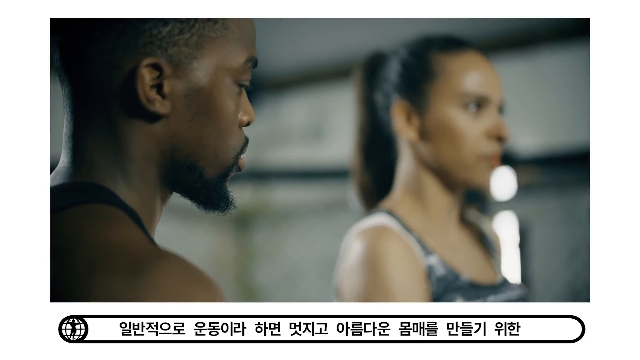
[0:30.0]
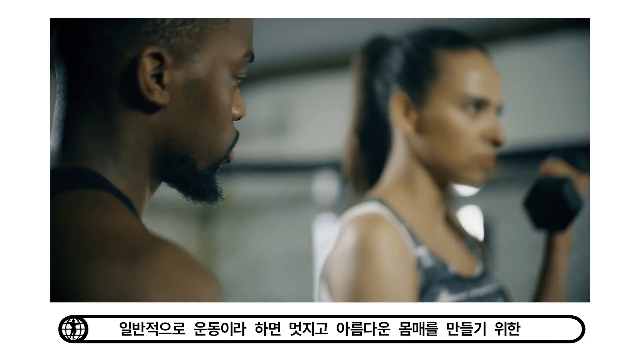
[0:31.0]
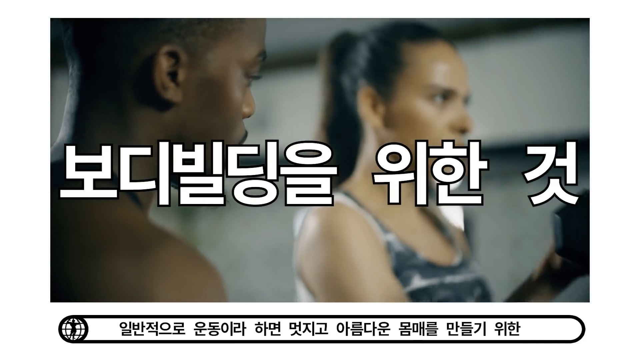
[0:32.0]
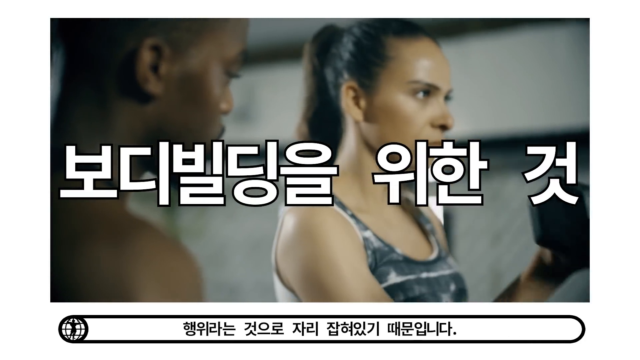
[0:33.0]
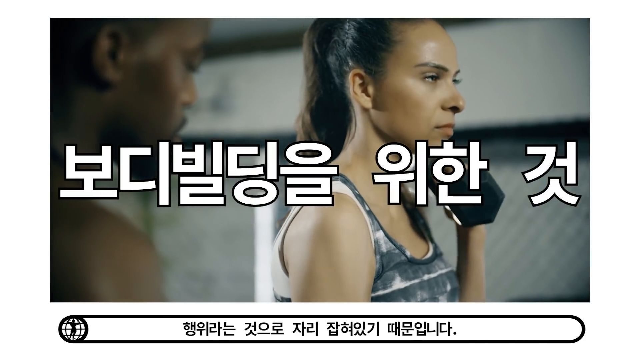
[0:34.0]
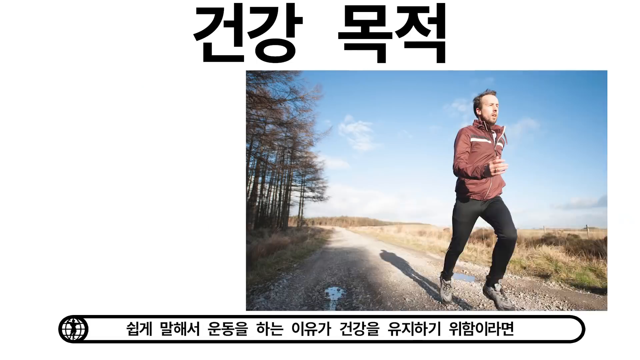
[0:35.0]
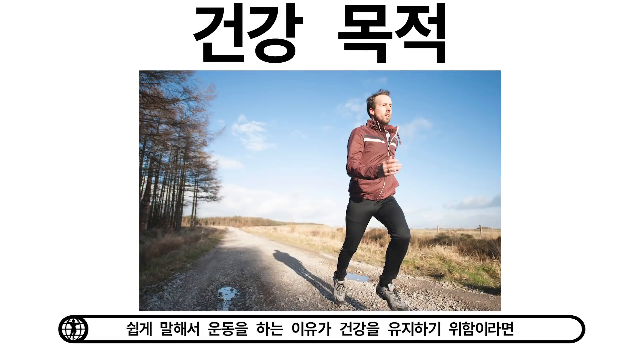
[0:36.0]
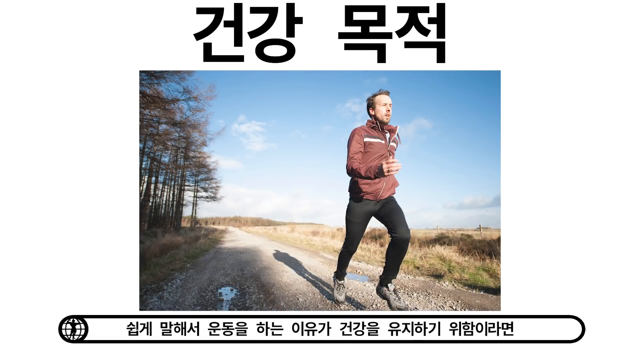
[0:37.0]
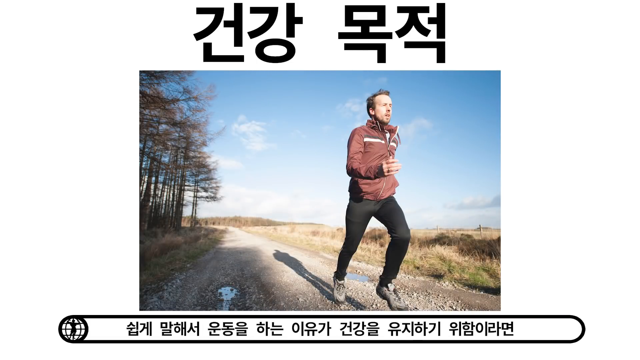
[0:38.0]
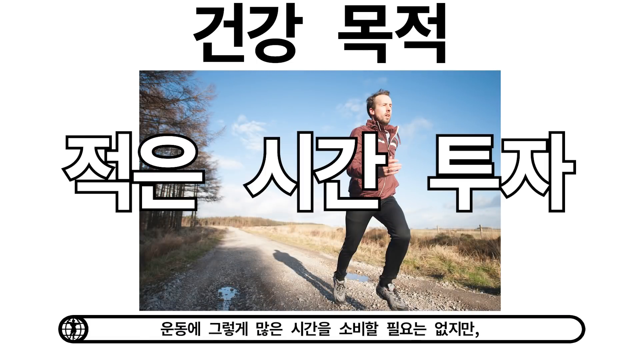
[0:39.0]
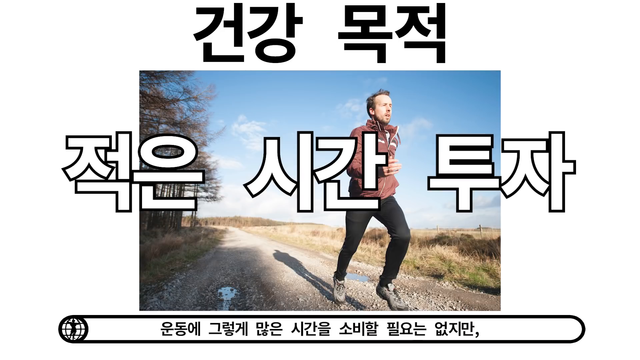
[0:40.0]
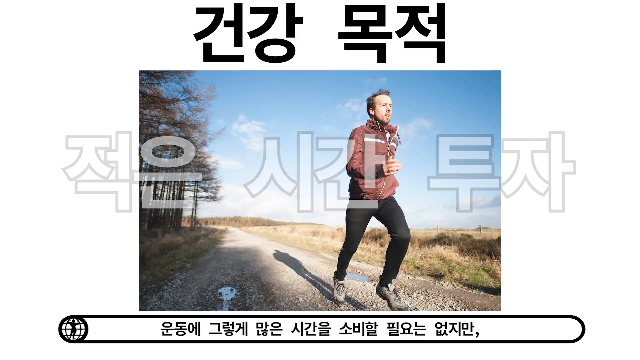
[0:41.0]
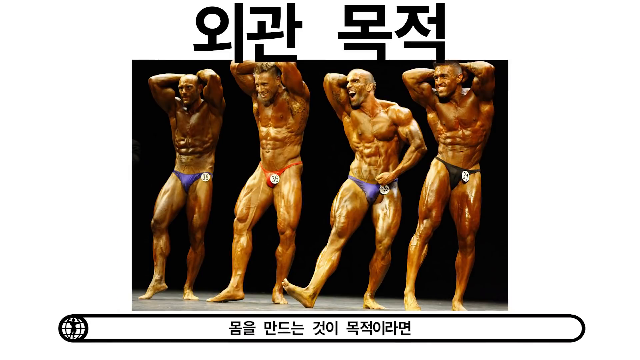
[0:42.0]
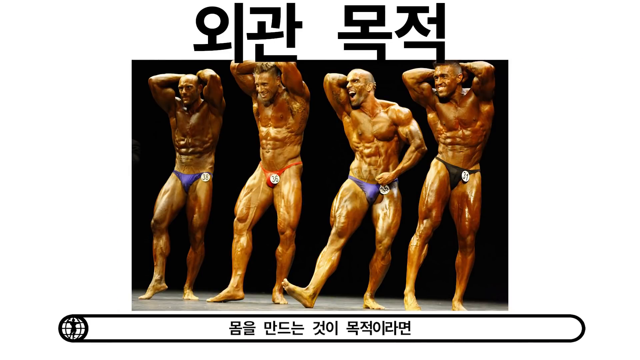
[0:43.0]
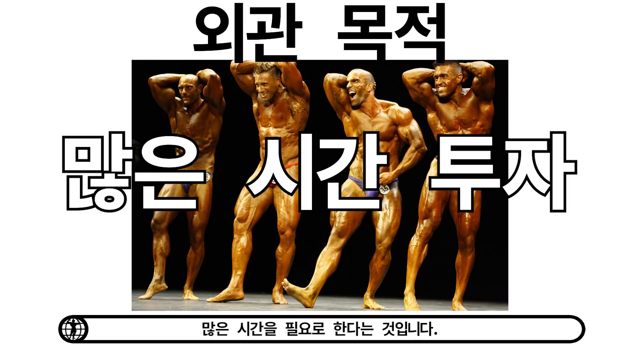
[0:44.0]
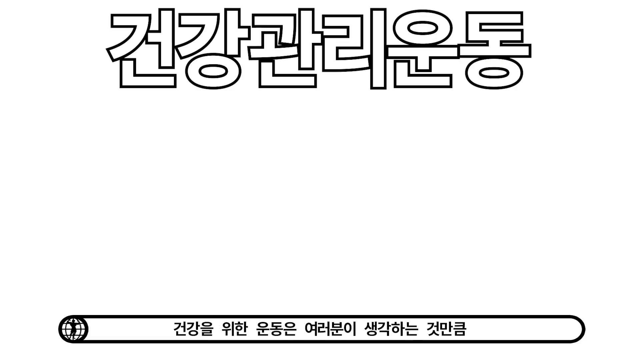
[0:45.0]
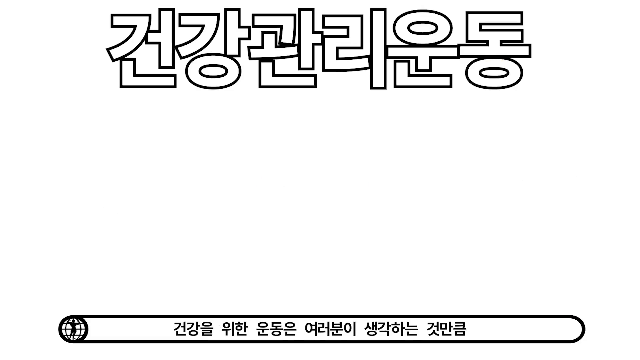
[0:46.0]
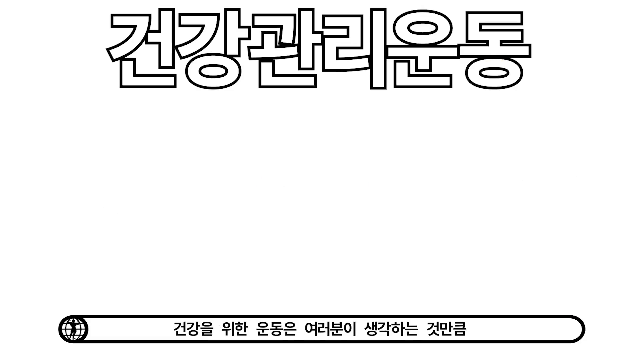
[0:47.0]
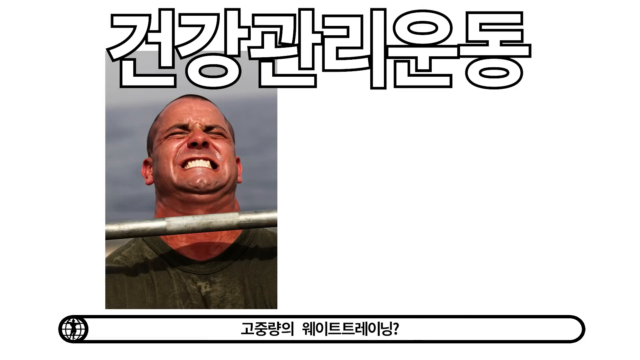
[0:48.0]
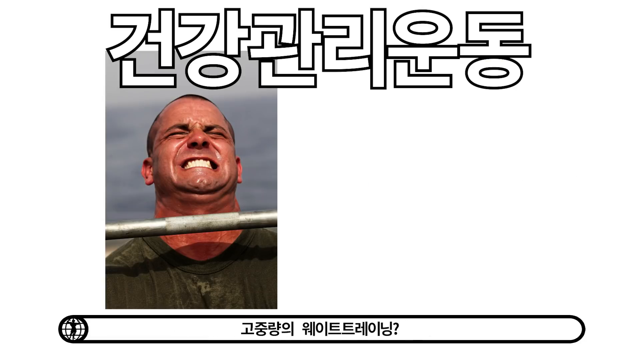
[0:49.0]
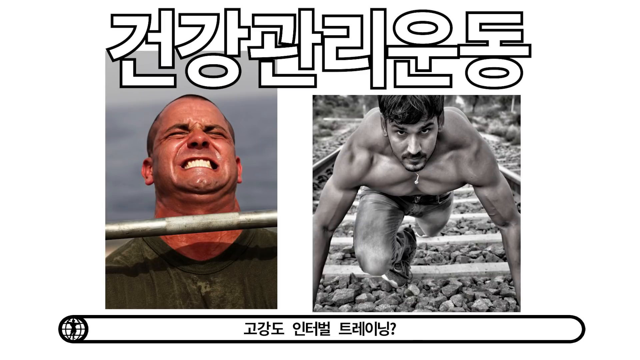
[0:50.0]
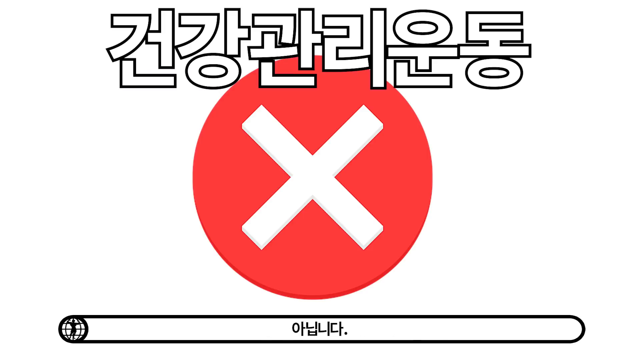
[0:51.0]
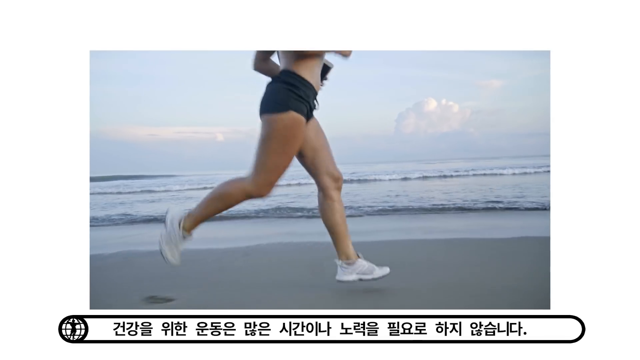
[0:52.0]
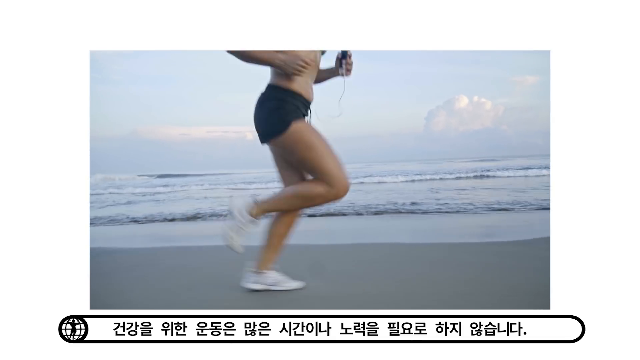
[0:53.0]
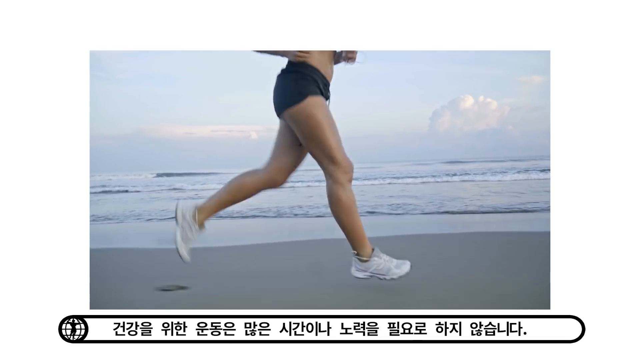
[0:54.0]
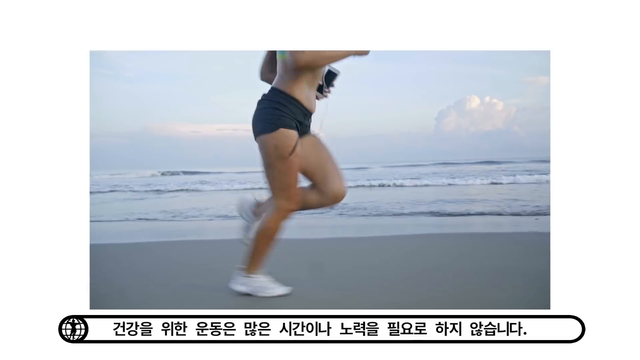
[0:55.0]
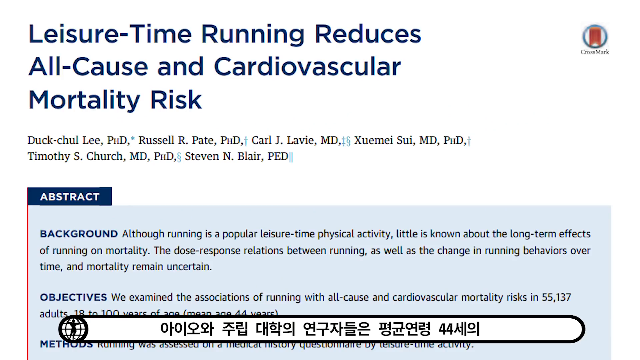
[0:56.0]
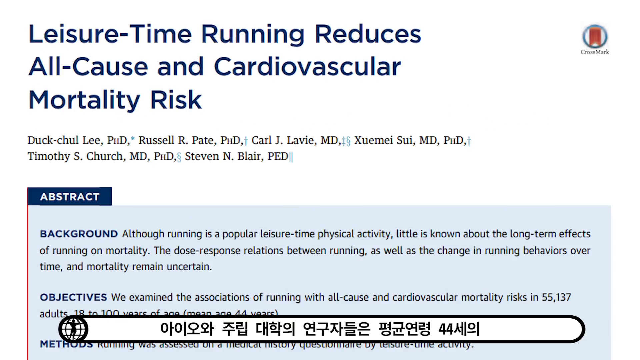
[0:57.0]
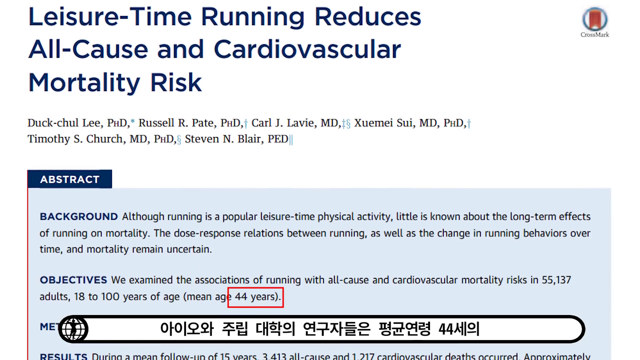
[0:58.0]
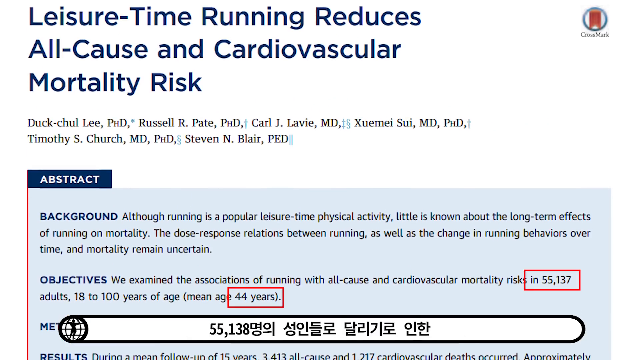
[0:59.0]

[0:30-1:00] A woman with a long ponytail works out in the background of a gym. A man in a windbreaker and long pants then jogs on a dirt road out in the prairie in the daytime. Asian-language text appears in the title at the top and along the middle of the frame. People work out with barbells in the gym, and a lady works out on her knees with free weights. A man jogs down a country road. Four men bodybuilding on stage flex. Pictures follow of a man flexing and weight lifting, in which only the bar is visible and the weights themselves are not shown. In the picture to the right of it, a man does push-ups on a railroad track with a gravel path, the muscles in his back flexing.